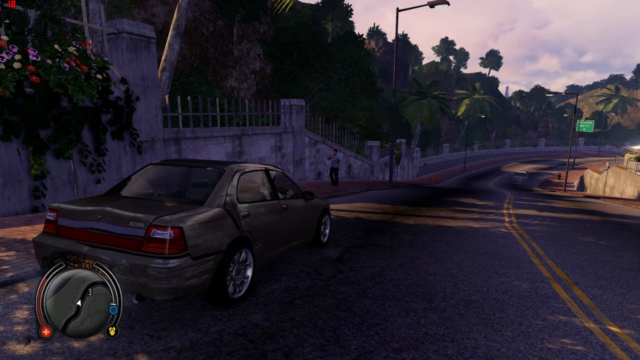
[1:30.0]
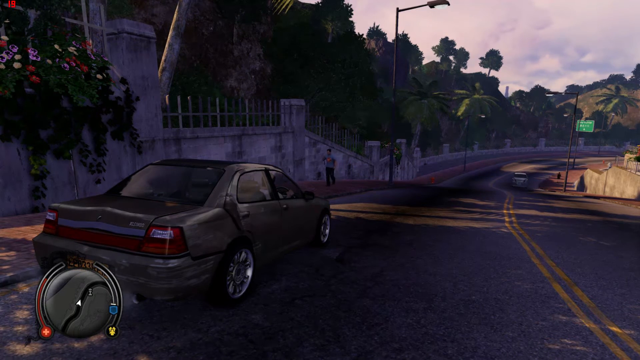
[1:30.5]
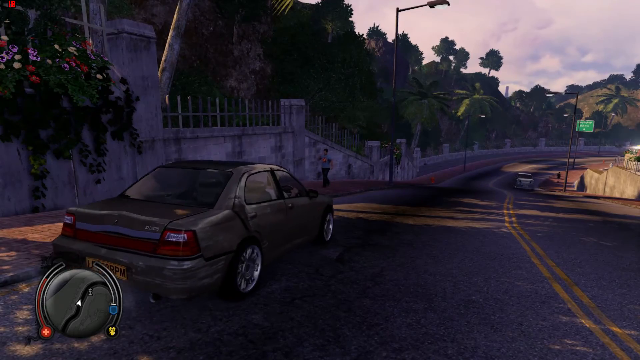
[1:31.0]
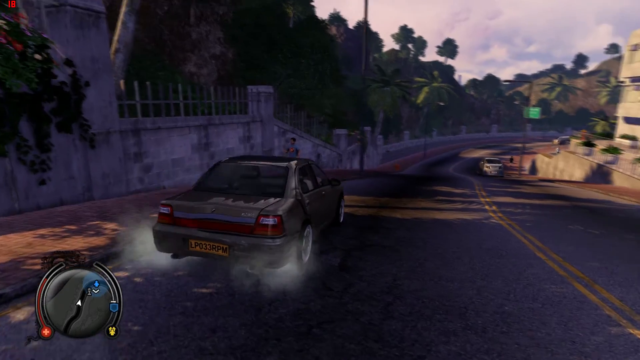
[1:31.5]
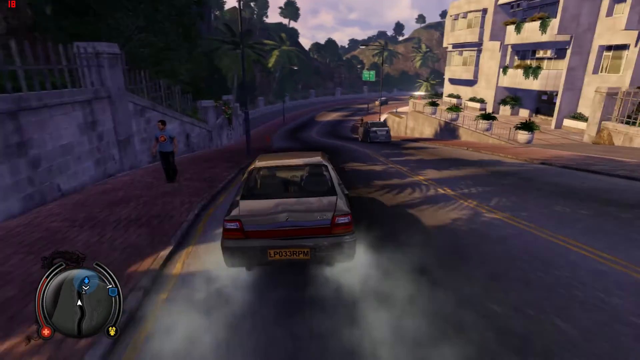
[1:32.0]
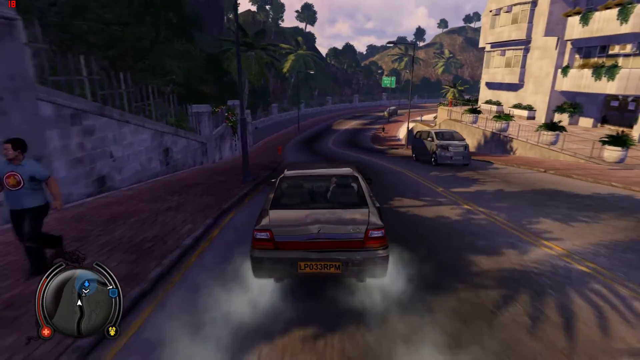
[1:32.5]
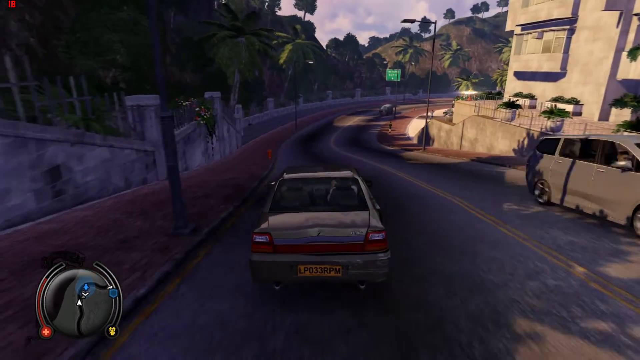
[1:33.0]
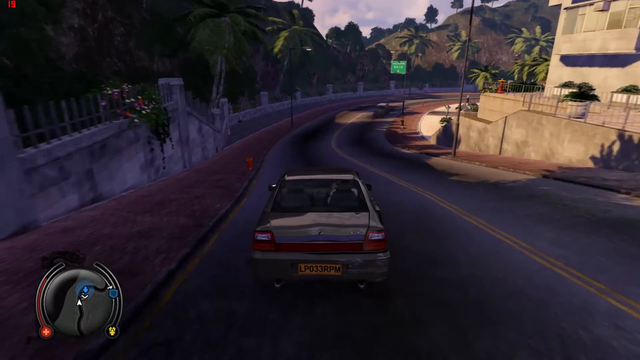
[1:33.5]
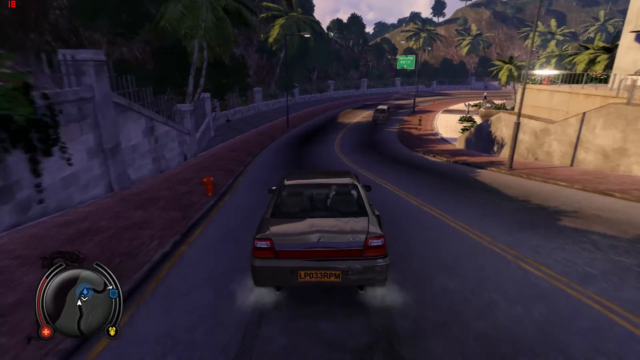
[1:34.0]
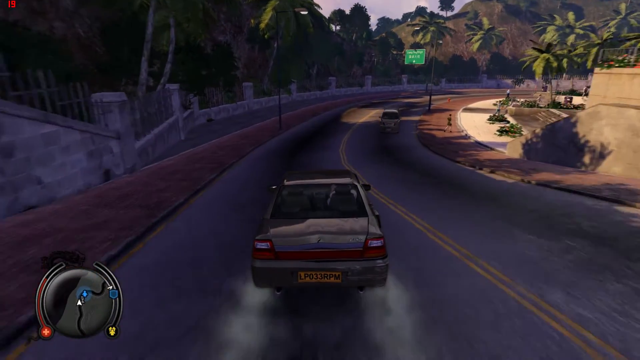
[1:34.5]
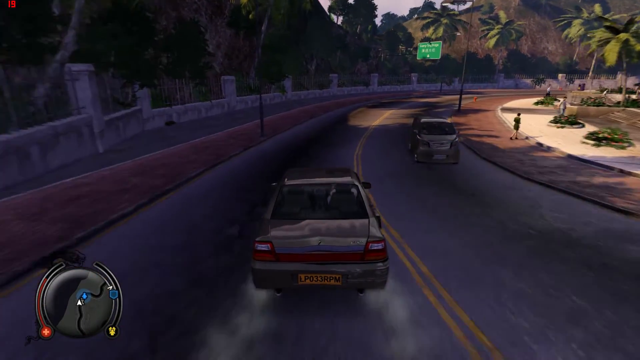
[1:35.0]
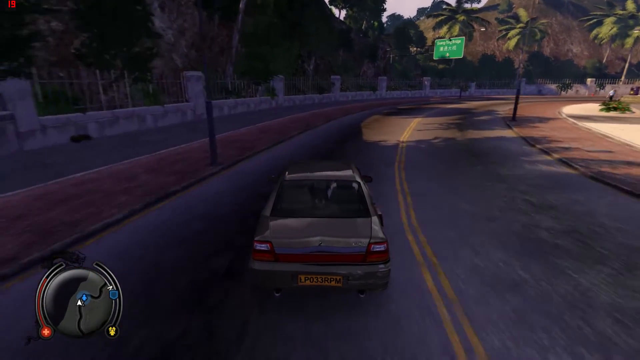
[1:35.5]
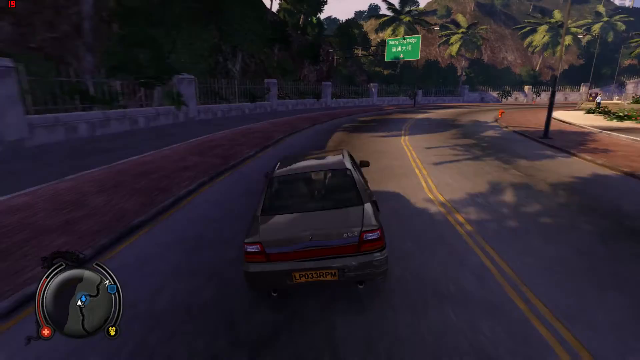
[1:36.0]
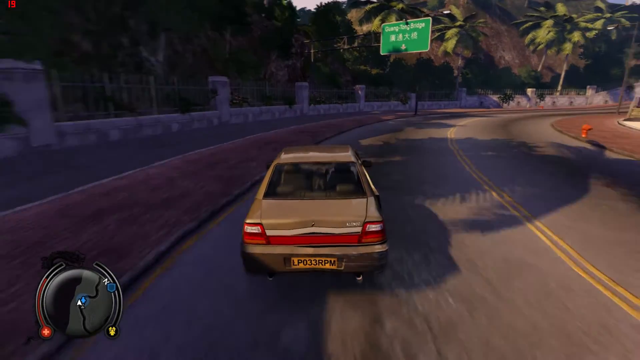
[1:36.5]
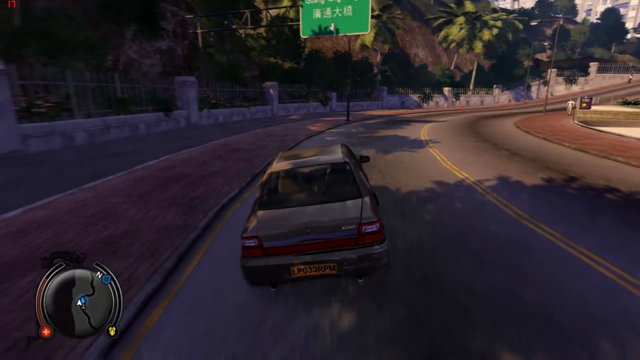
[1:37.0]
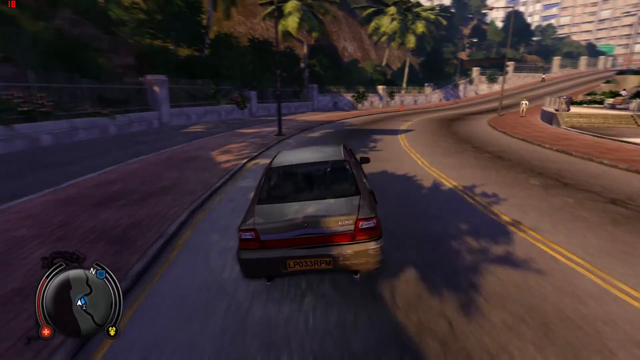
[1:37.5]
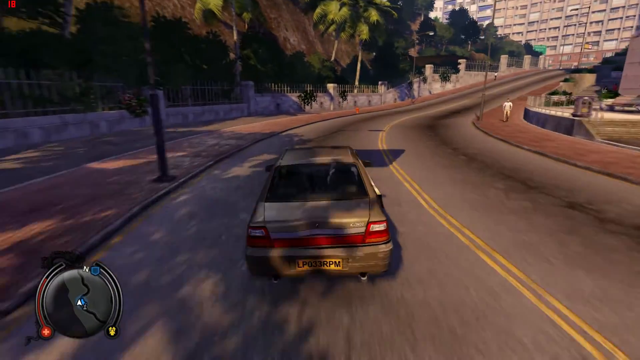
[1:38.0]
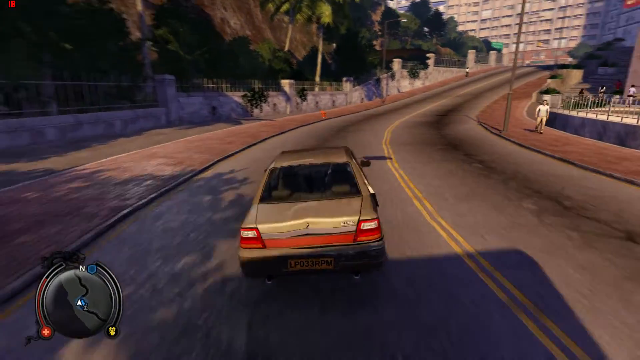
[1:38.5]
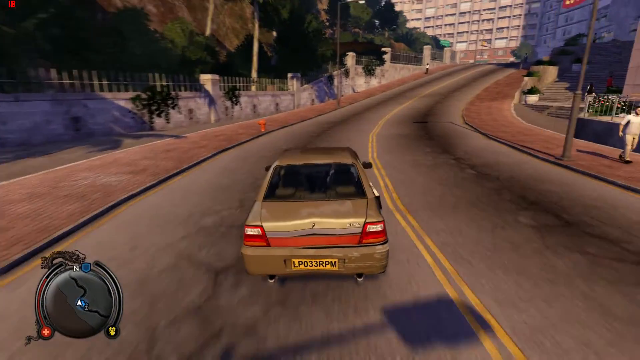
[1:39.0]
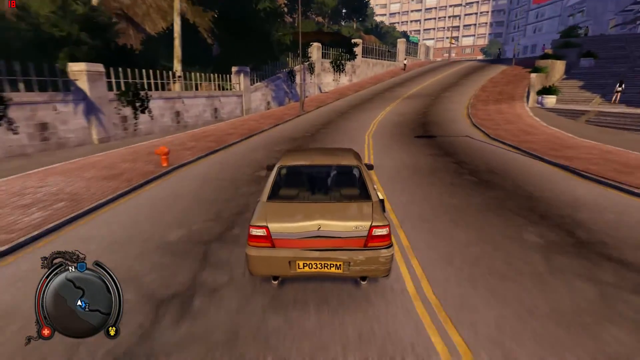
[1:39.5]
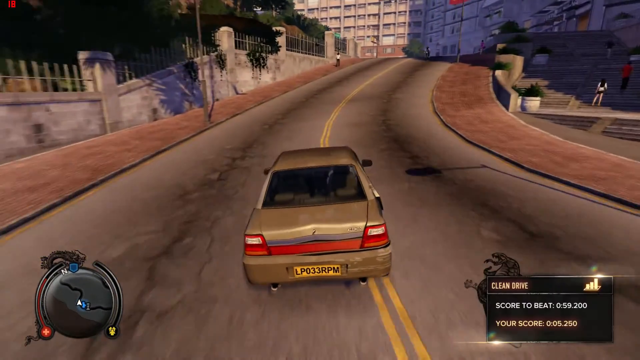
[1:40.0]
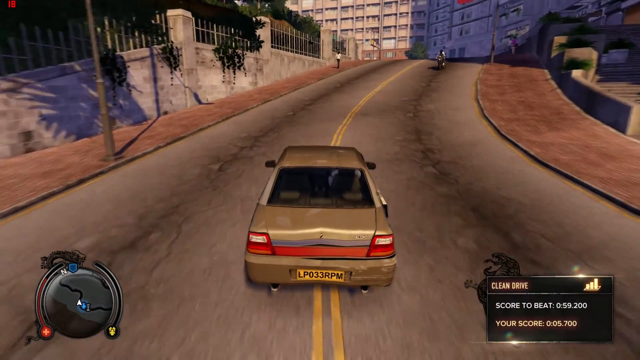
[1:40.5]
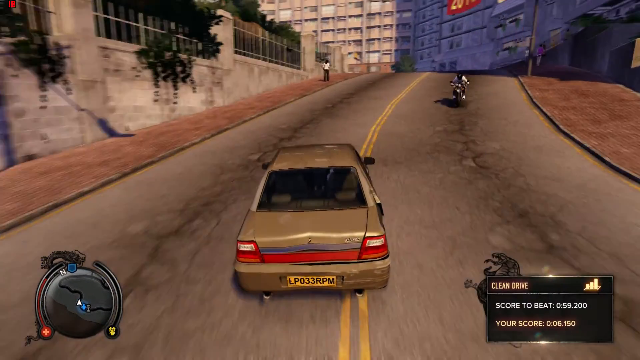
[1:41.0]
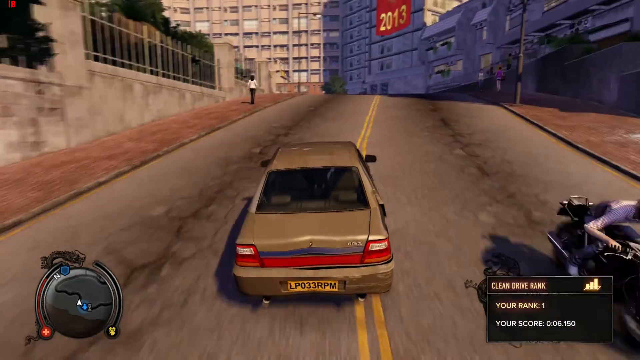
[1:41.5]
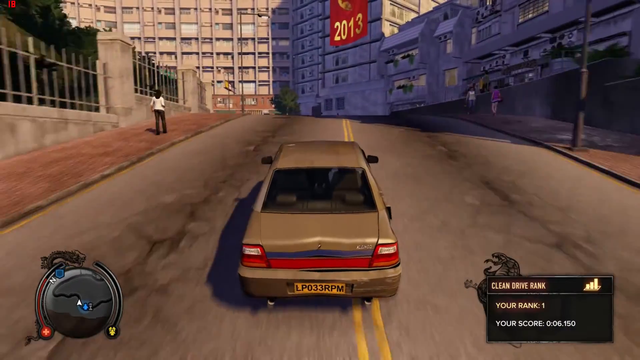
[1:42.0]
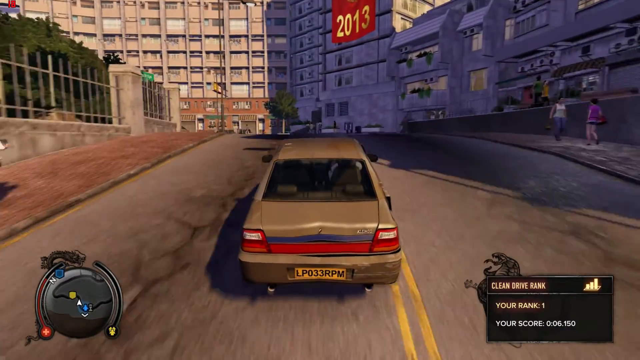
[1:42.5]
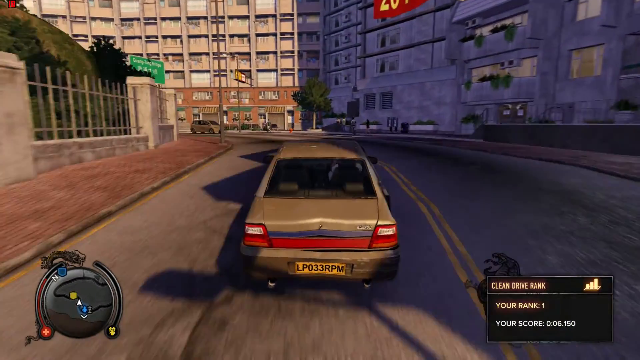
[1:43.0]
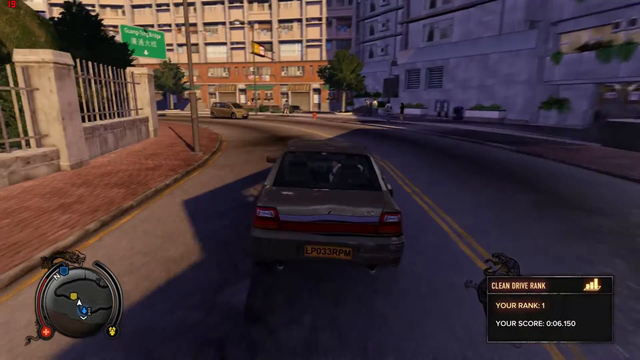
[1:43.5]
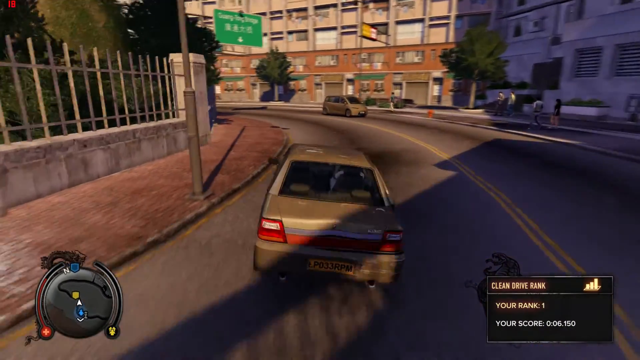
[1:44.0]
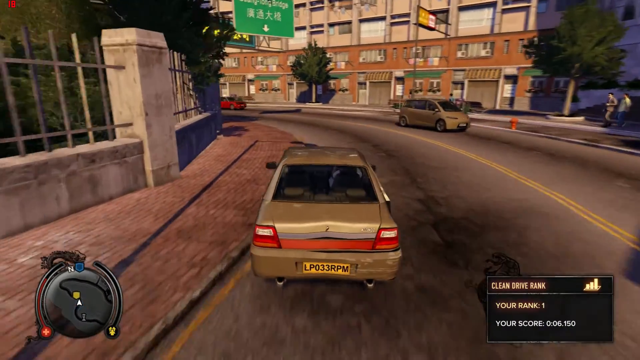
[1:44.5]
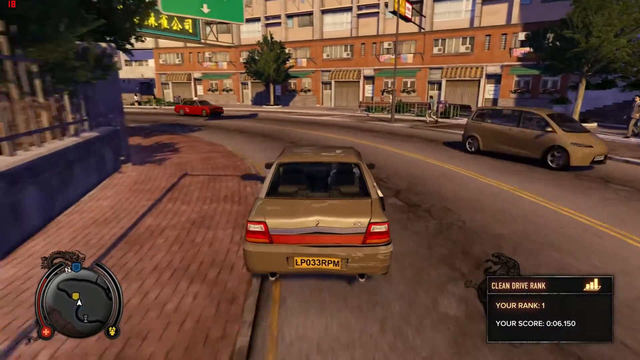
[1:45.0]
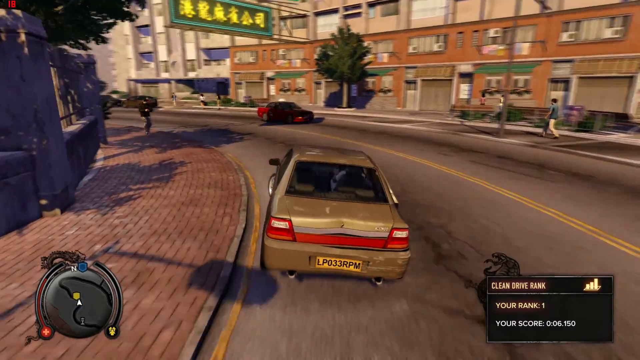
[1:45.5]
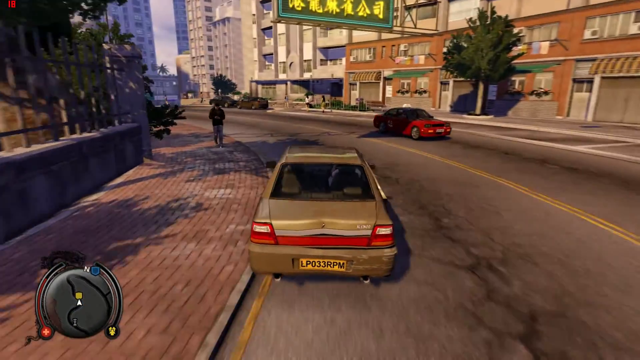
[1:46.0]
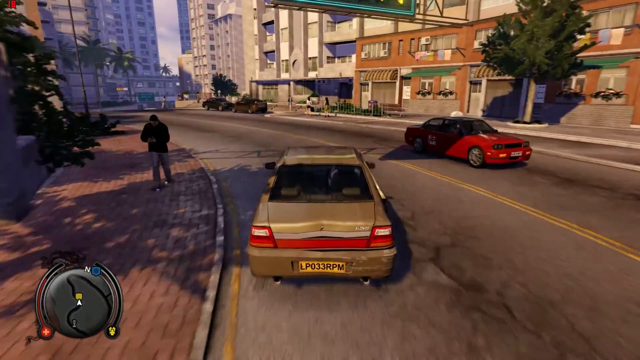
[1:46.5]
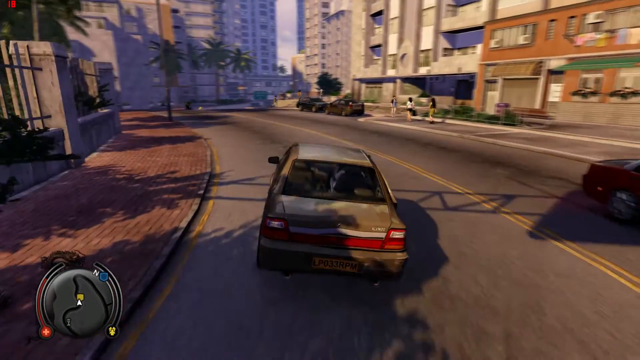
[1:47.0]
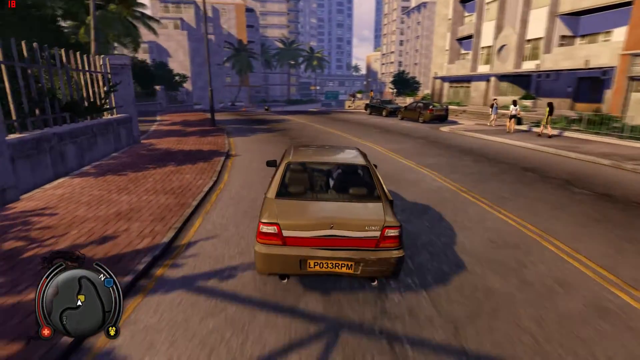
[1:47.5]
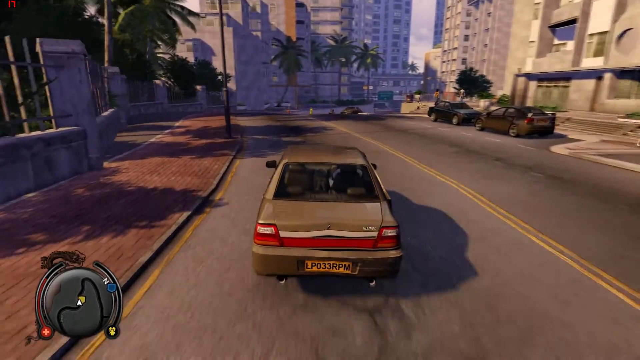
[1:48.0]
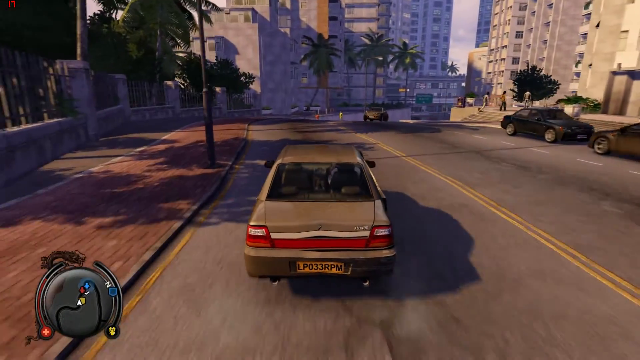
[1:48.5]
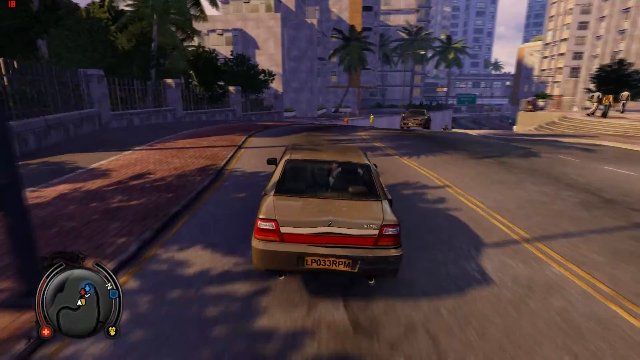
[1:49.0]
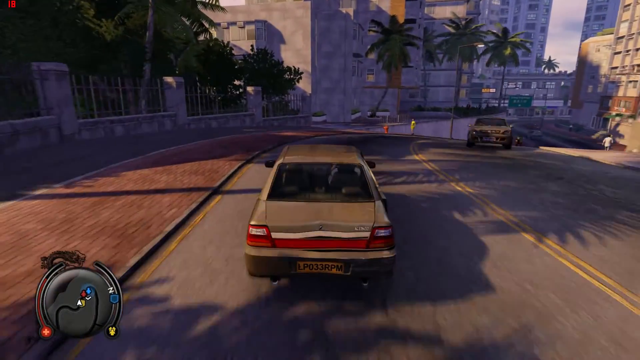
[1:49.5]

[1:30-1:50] The video creator is now driving the vehicle on the left-hand side of the road, accelerating harshly, and the camera angle changes to directly behind the vehicle in a third-person view. The vehicle drives down the street, turning slightly right around a curve, and a green street sign with white text is visible on the left-hand side of the road, with some English words on top and some Chinese letters in the middle. The vehicle keeps accelerating and turning right, and a badge appears in the bottom right-hand corner reading "clean drive", "score to beat" and "you are rank one". It seems to be a vehicle racing game, with the video creator racing this car. The graphics are somewhat smooth but not hyper-realistic, and the quality is subpar; there is noticeable lag, and neither the frames nor the vehicle's driving dynamics are smooth.